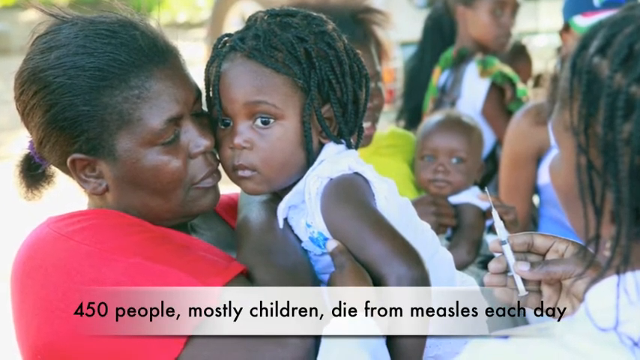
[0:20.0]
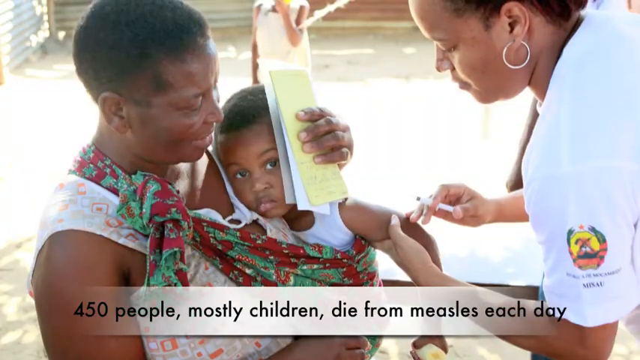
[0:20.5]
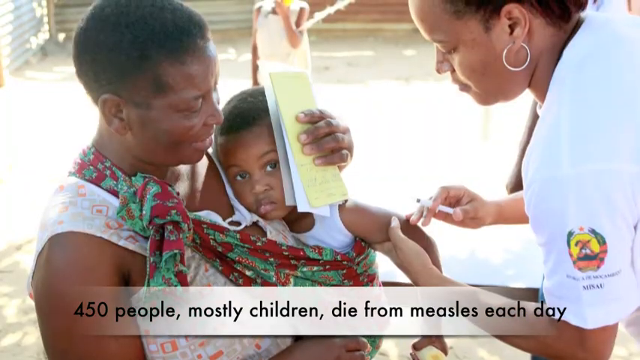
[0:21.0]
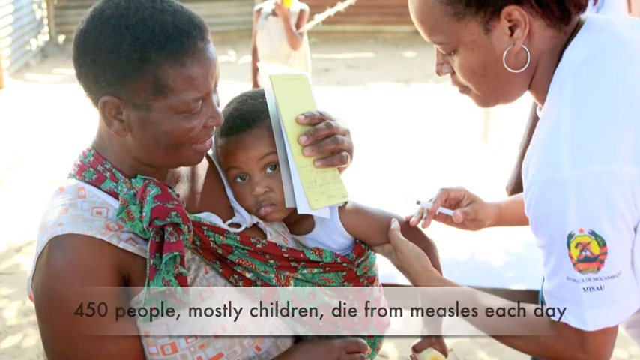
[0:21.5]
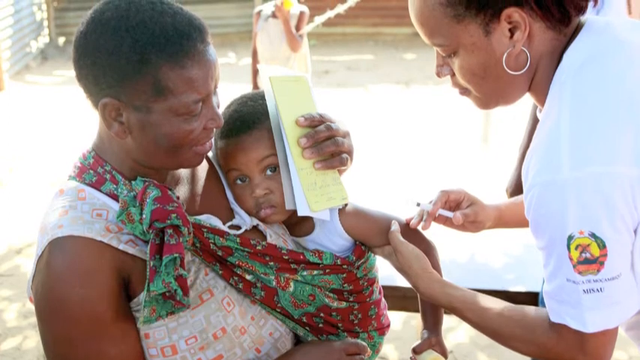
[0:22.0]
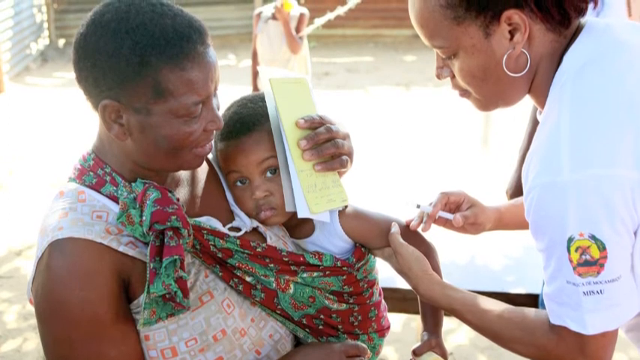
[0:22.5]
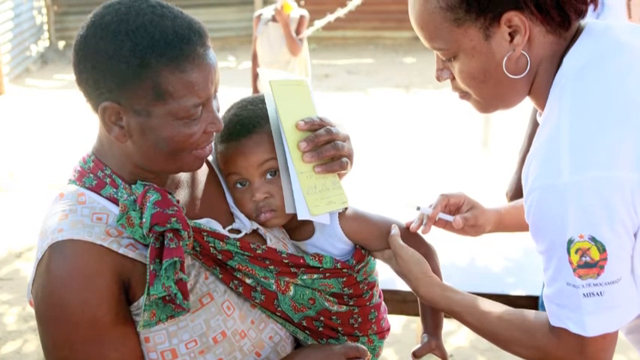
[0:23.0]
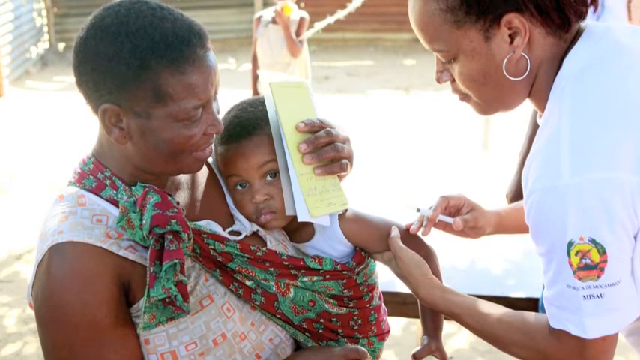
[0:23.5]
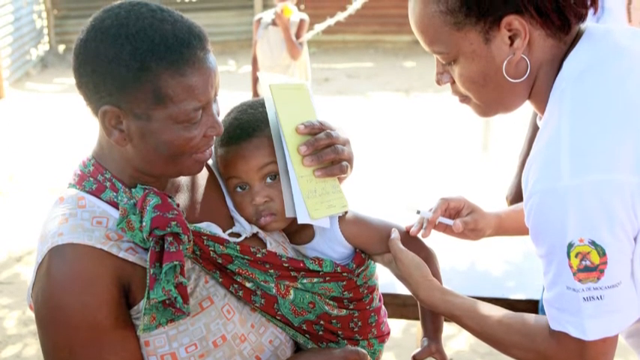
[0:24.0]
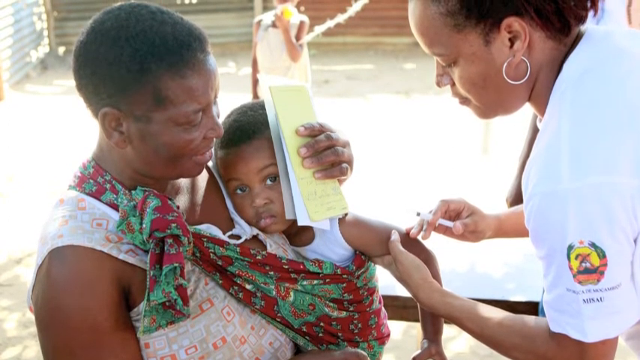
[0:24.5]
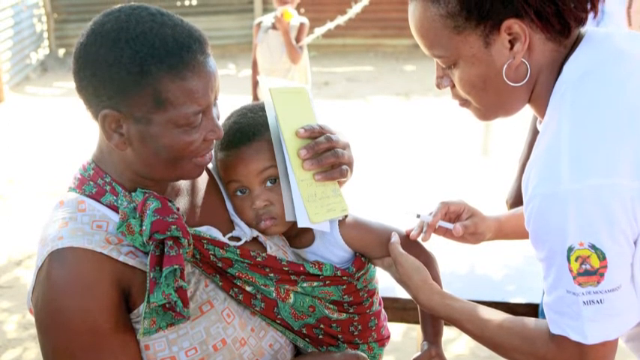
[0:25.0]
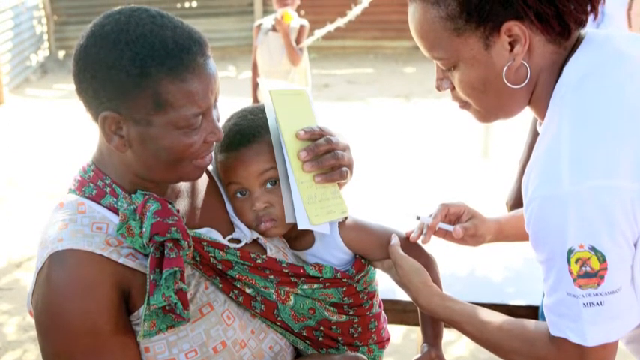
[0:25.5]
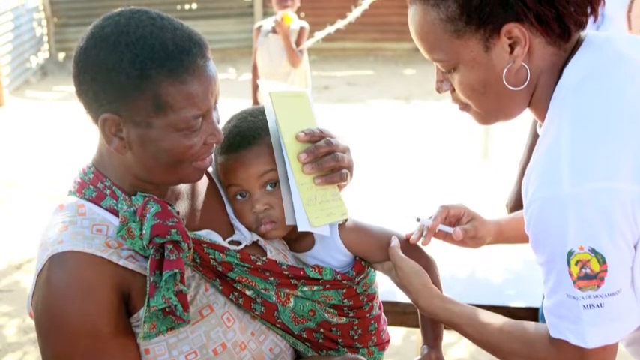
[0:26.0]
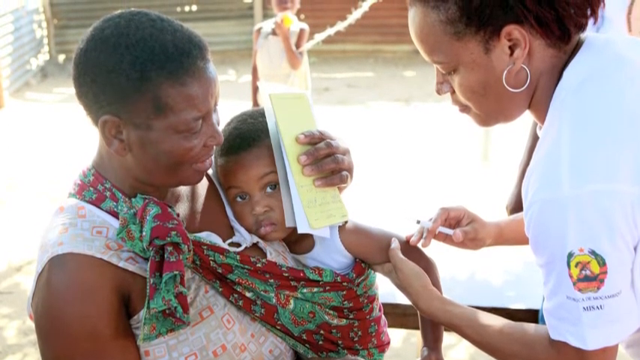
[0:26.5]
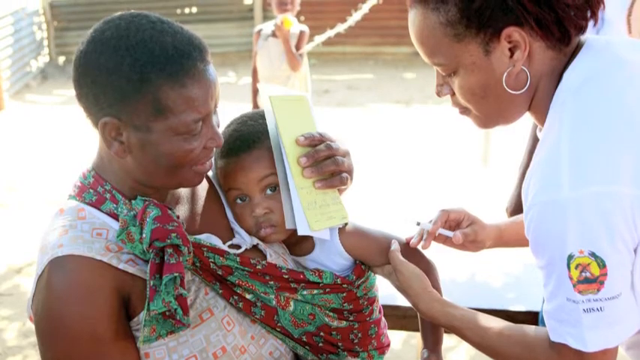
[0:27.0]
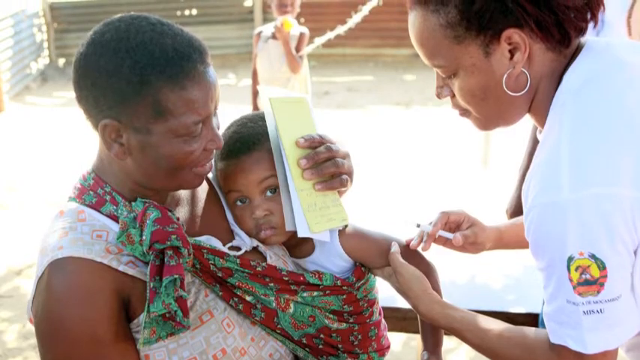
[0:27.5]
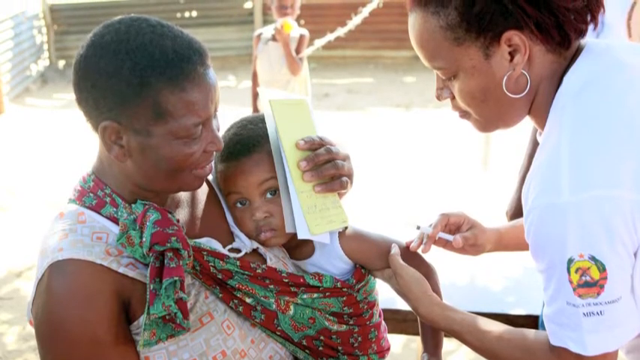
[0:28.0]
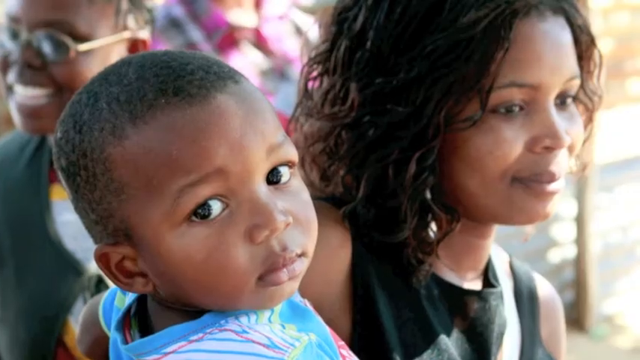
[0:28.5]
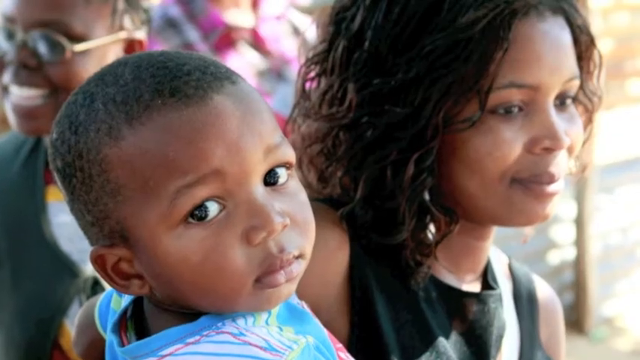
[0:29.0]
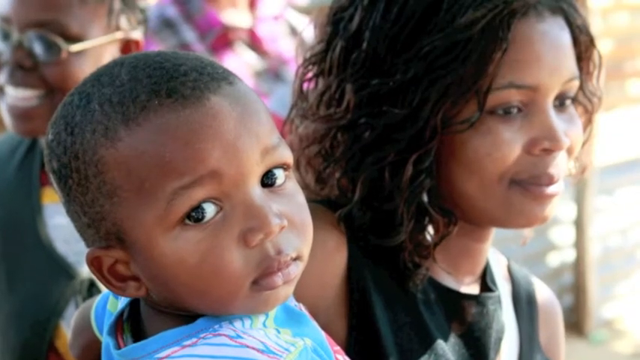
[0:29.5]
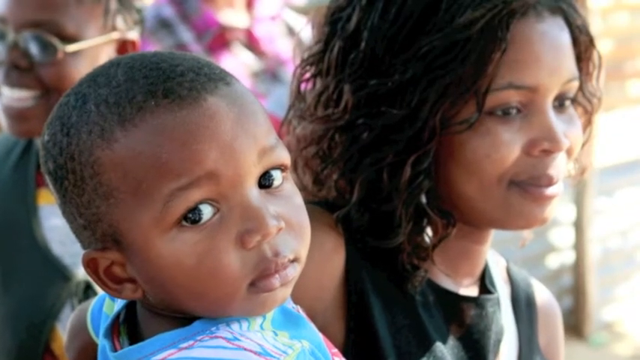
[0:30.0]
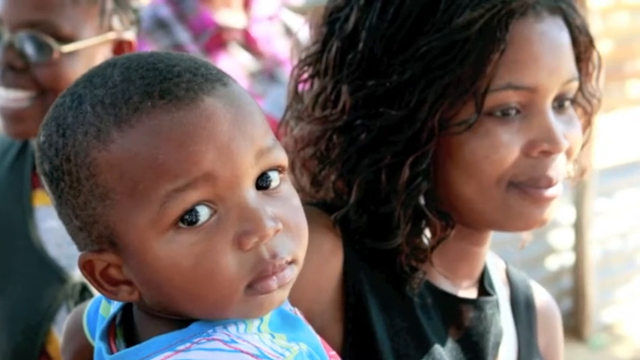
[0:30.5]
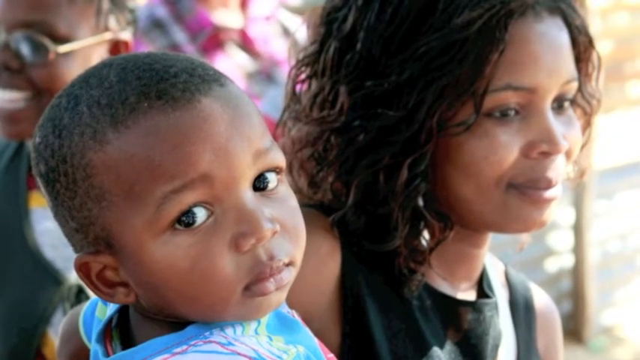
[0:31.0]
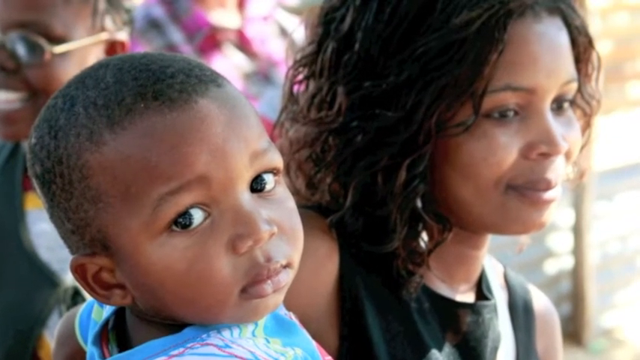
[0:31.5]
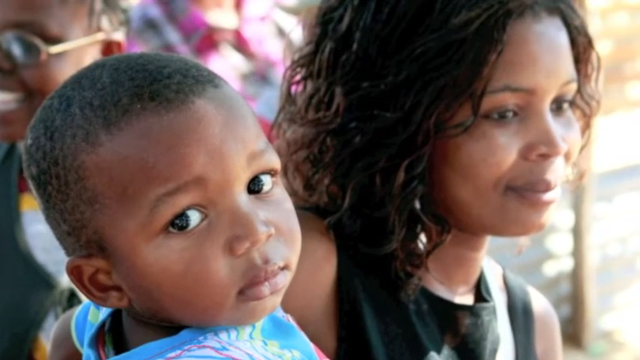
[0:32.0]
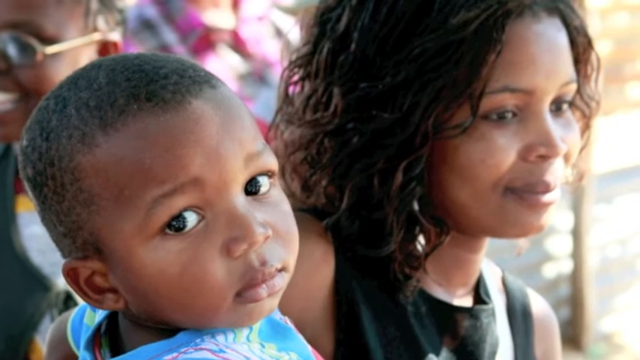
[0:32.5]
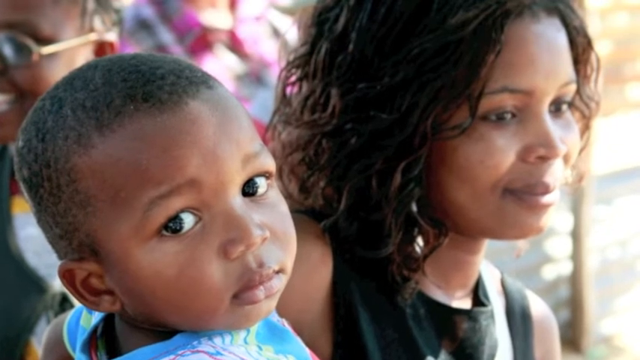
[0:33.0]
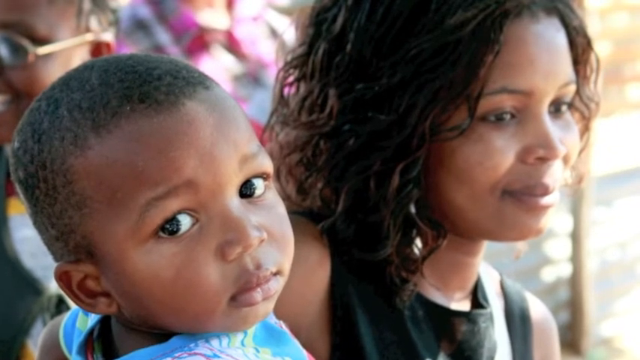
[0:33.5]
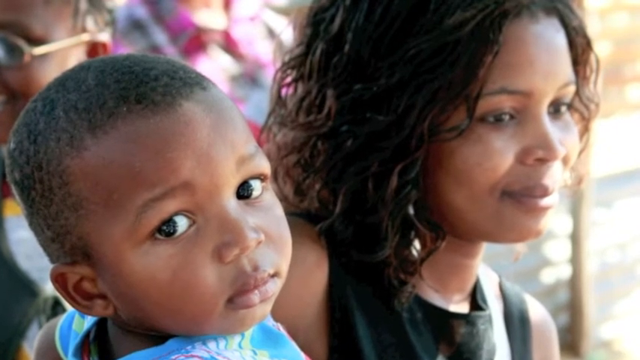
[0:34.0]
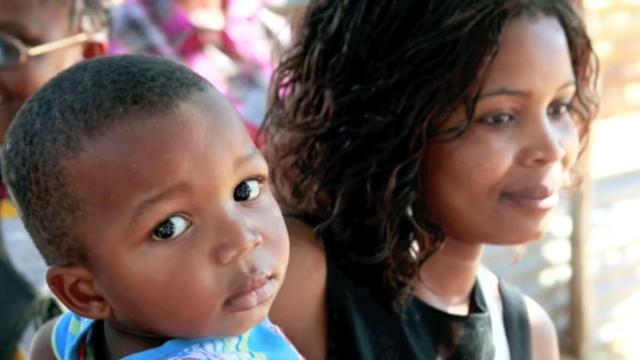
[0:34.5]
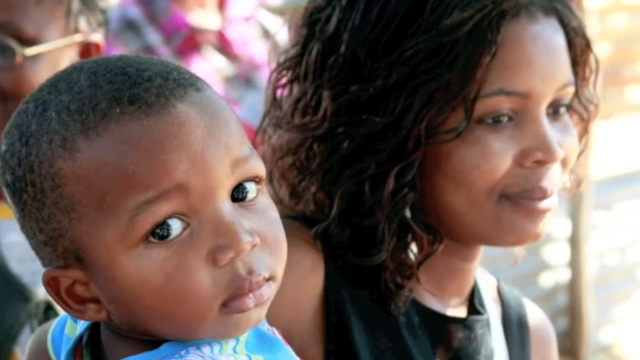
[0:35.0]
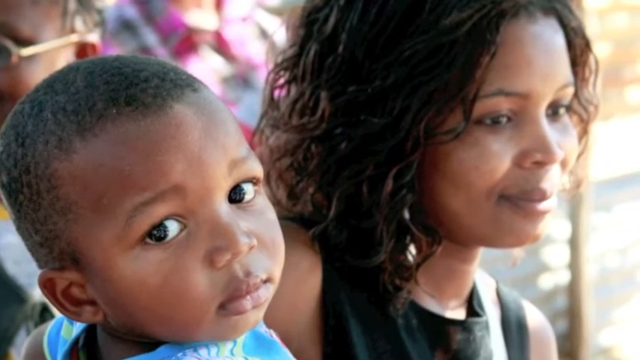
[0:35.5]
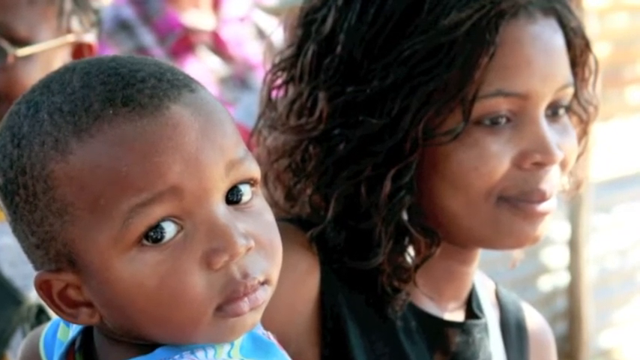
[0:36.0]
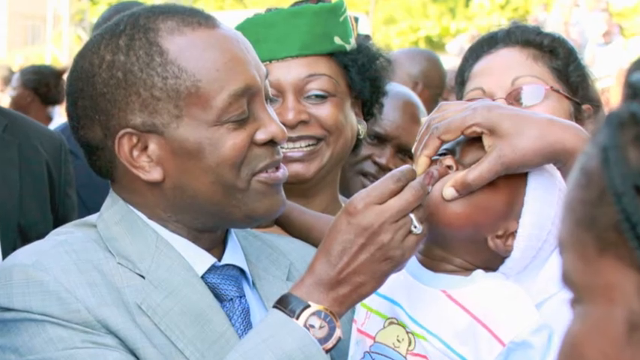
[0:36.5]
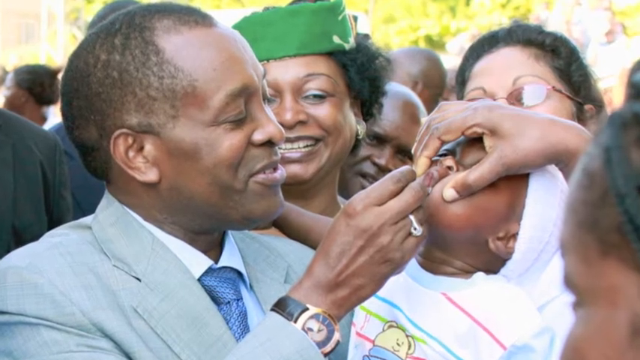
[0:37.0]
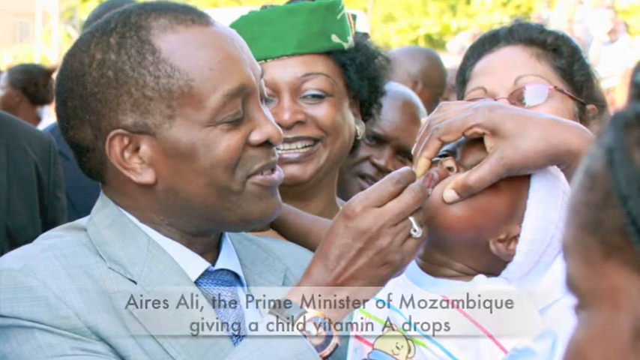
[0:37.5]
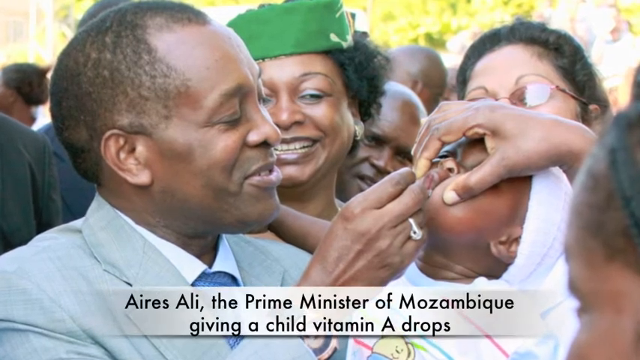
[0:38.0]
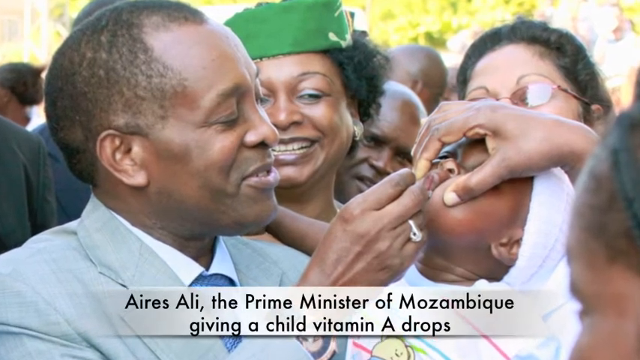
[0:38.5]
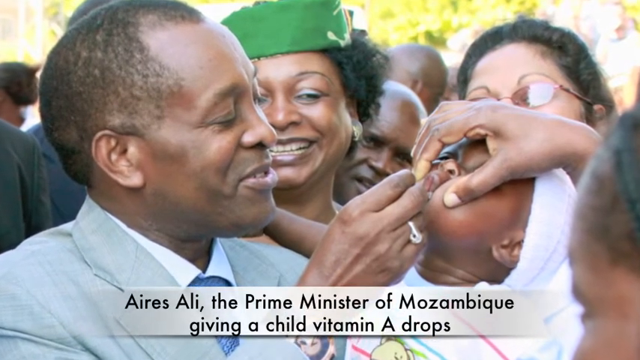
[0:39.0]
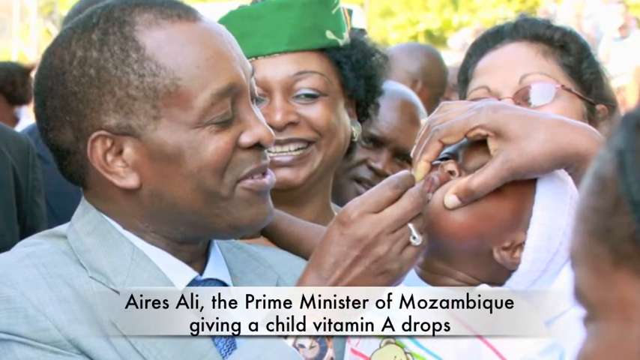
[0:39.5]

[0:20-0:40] A series of still images is shown. The first shows a man holding a small boy in some sort of wrap that keeps him against the chest. The boy's left arm hangs out of the sling. Another woman holds the boy's arm with her left hand, and in her right hand is a needle with a measles vaccine. While this image is on screen, the camera moves very slightly upward over a couple of seconds. The second image also shows a parent and child: a woman on the right-hand side, visible from the shoulders up, looks off toward the left side of the screen. In her arms is a small boy who looks to be about three or four years old. His head is twisted toward the screen so he looks at the camera while his body faces his mother. The camera zooms in slightly toward the mother's face over a couple of seconds. The next image shows a man in a gray suit on the left-hand side, surrounded by a crowd of smiling people. Immediately behind him is a woman in a green hat, and other people appear to be standing on their tiptoes trying to see. In the man's arm, on the right side, is a toddler who looks to be between one and two years old. An adult hand reaches up over his face, holding on to the corners of his mouth. The man in the suit has his hand up toward the mouth, holding on to something. A caption pops up in a text box along the bottom of the screen reading "Aries Alley, the Prime Minister of Mozambique, giving a child vitamin A drops."